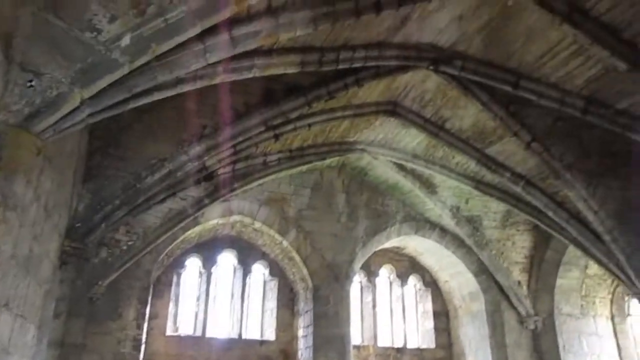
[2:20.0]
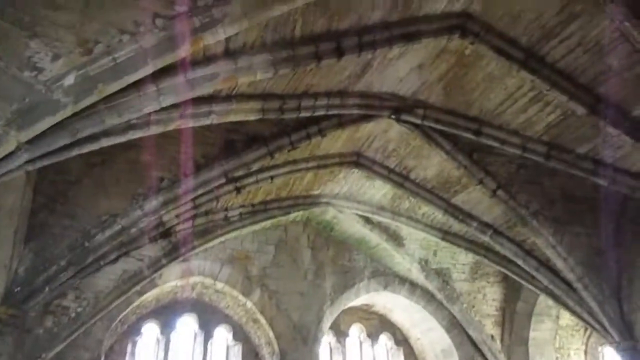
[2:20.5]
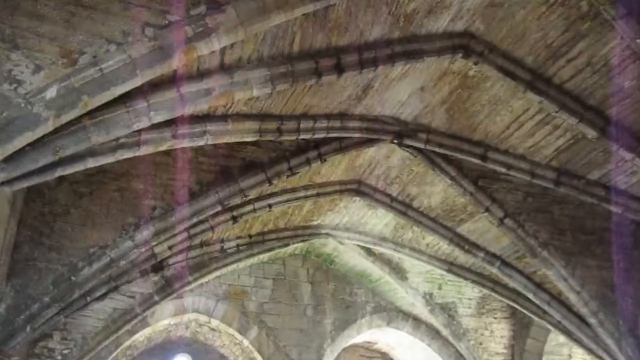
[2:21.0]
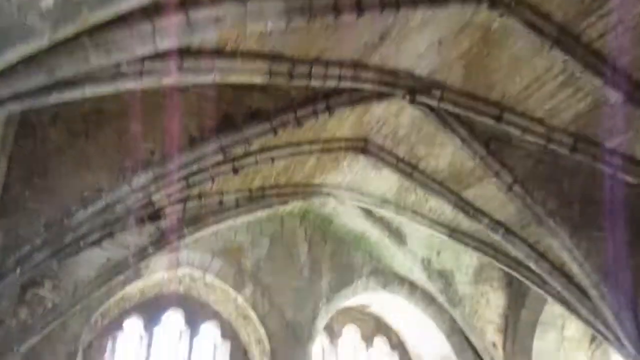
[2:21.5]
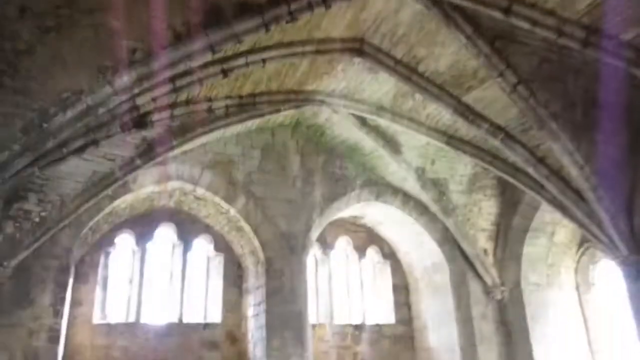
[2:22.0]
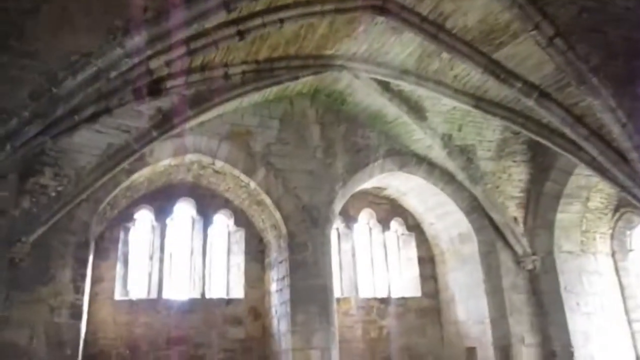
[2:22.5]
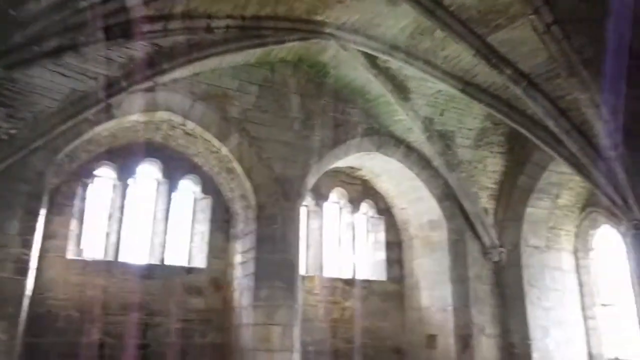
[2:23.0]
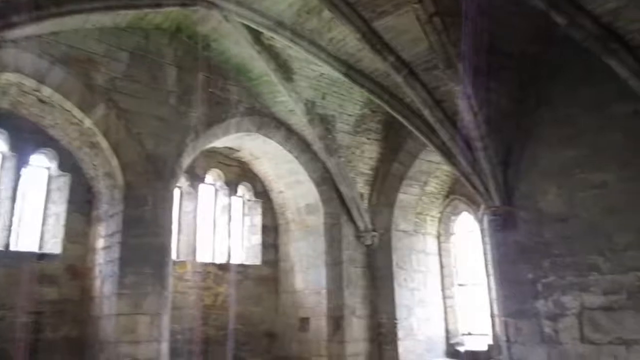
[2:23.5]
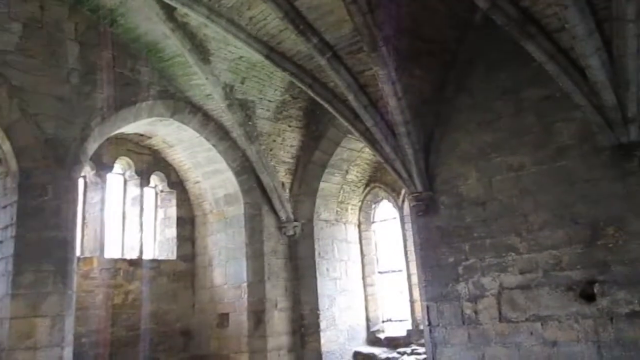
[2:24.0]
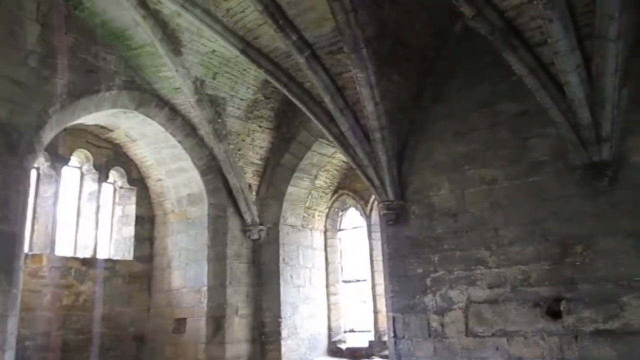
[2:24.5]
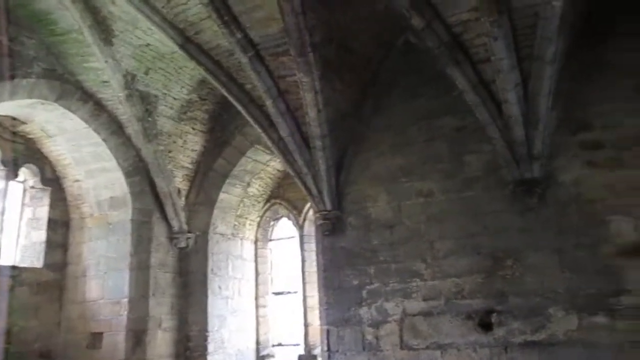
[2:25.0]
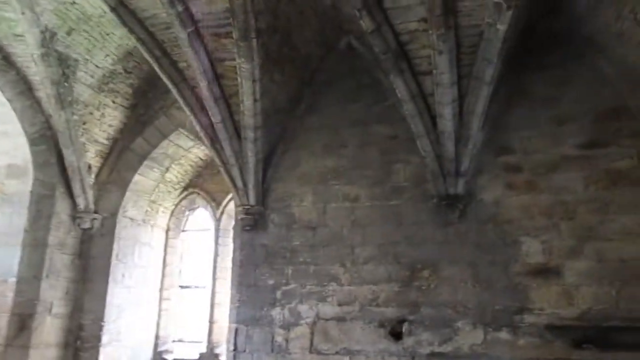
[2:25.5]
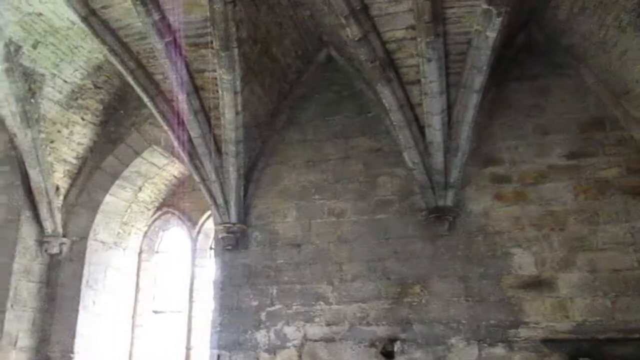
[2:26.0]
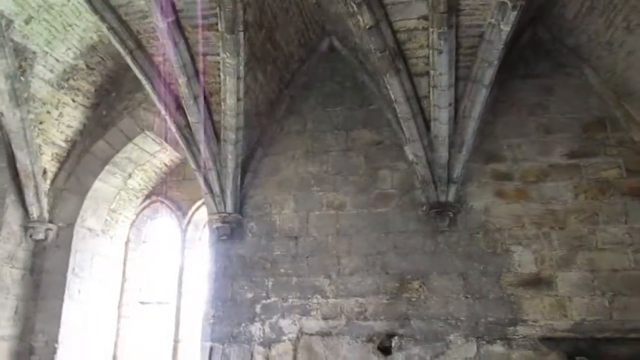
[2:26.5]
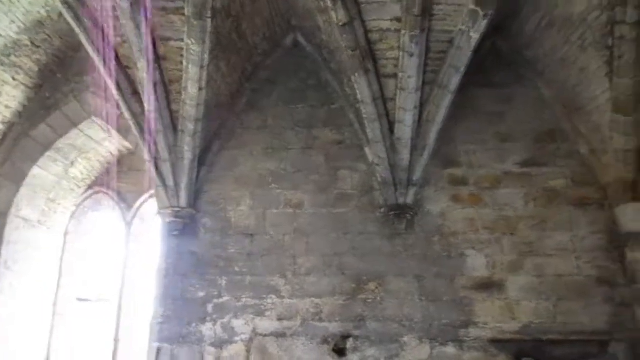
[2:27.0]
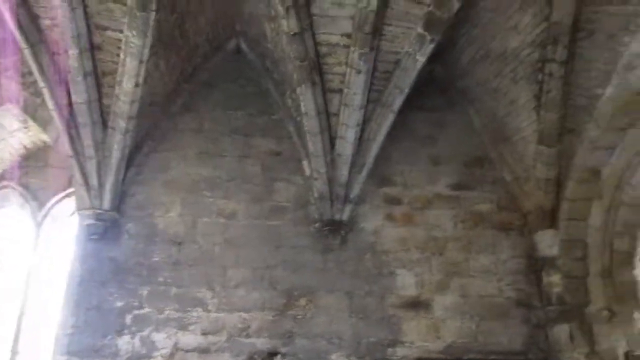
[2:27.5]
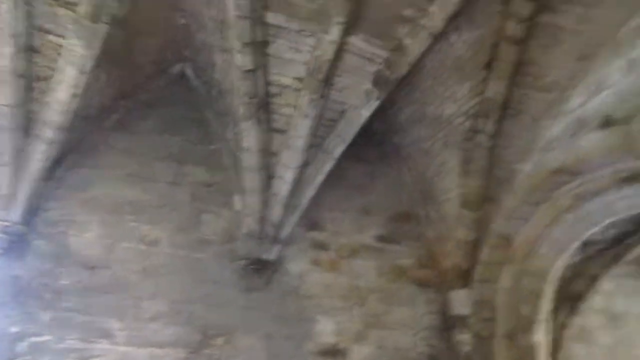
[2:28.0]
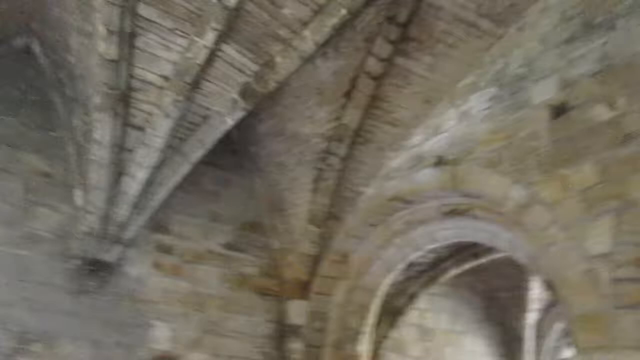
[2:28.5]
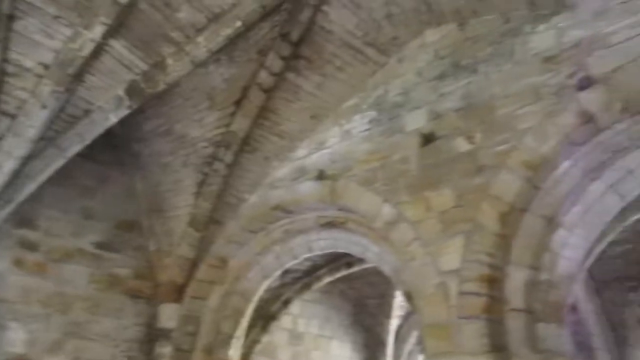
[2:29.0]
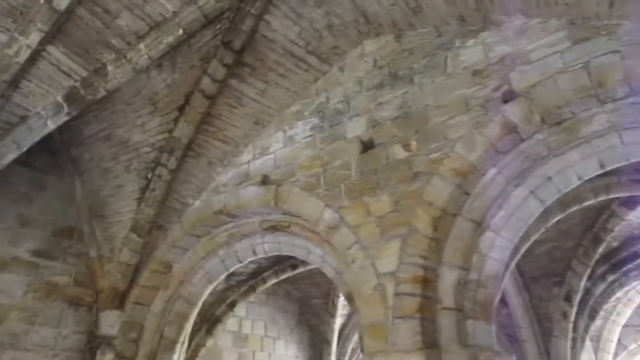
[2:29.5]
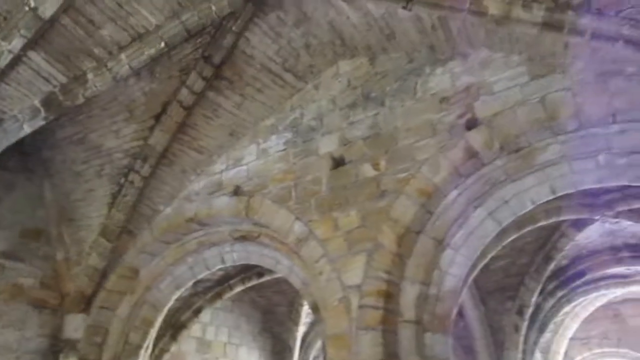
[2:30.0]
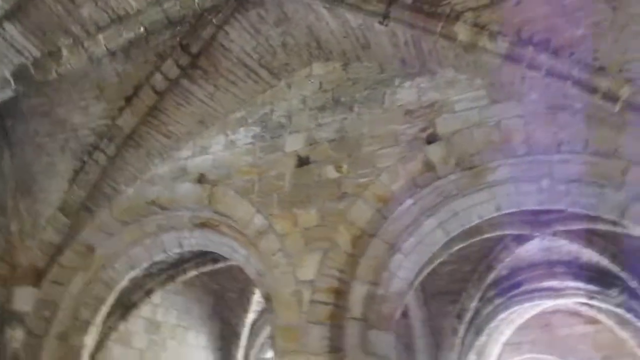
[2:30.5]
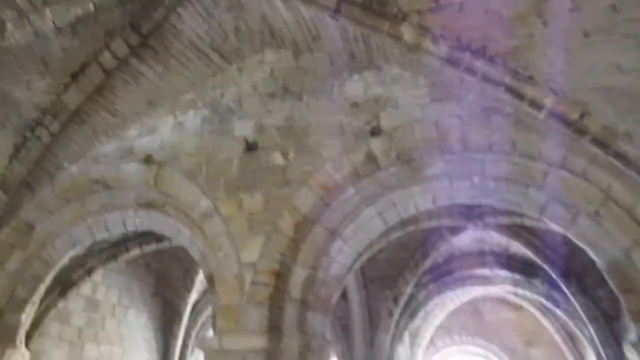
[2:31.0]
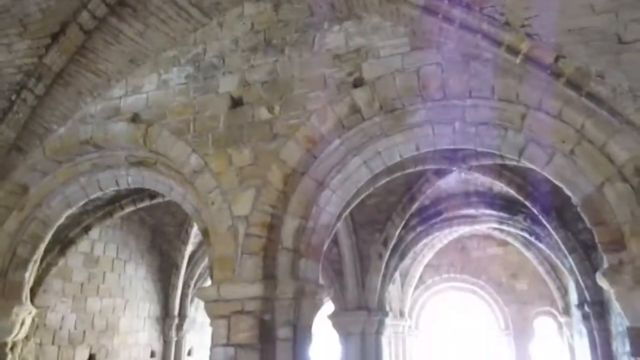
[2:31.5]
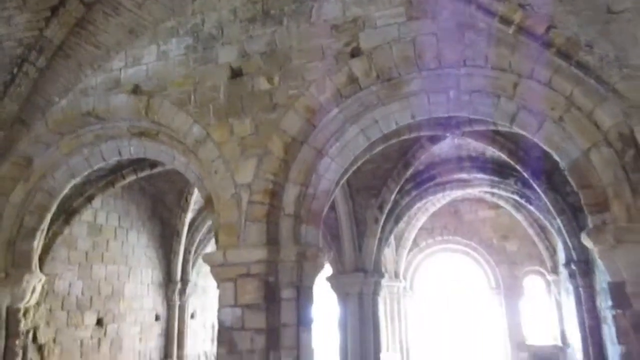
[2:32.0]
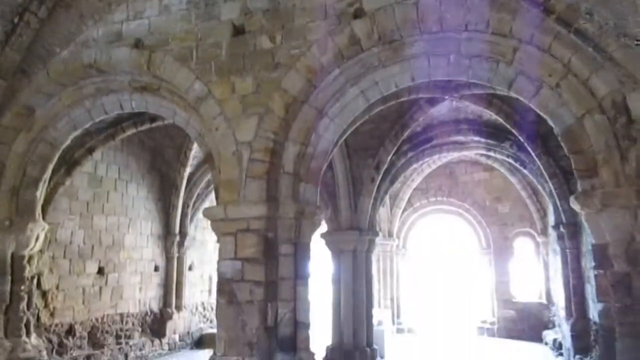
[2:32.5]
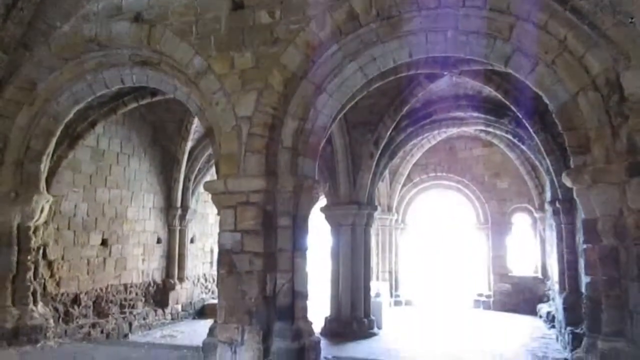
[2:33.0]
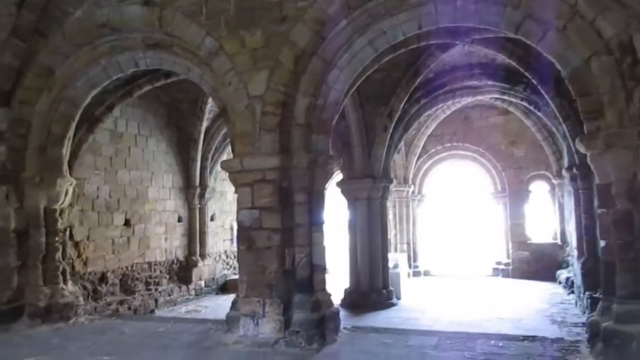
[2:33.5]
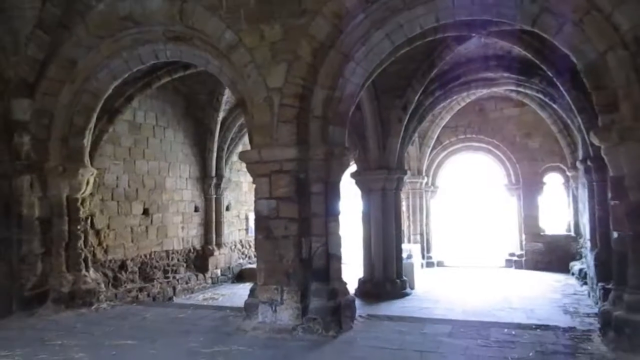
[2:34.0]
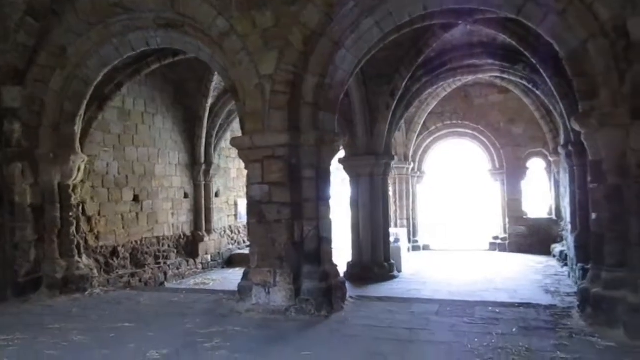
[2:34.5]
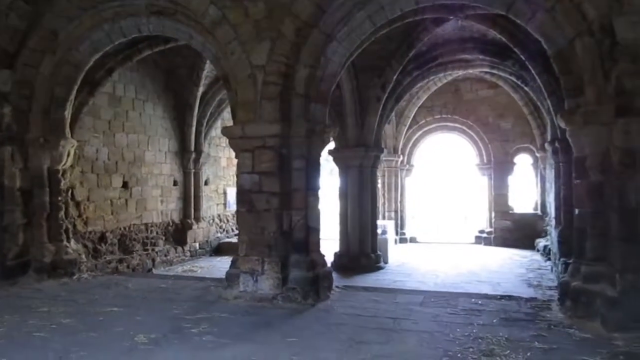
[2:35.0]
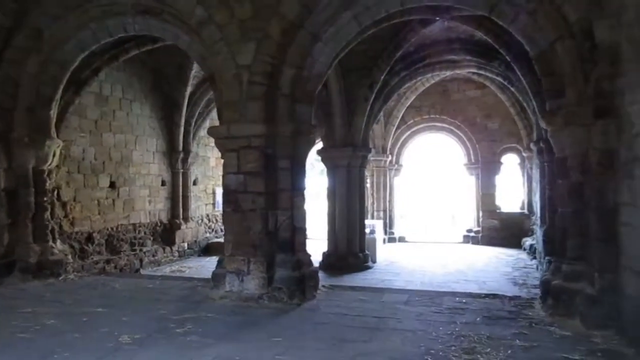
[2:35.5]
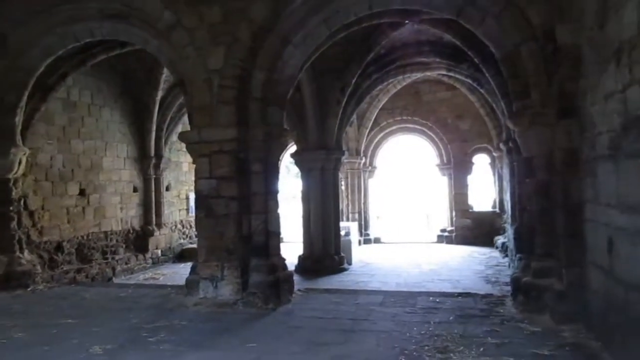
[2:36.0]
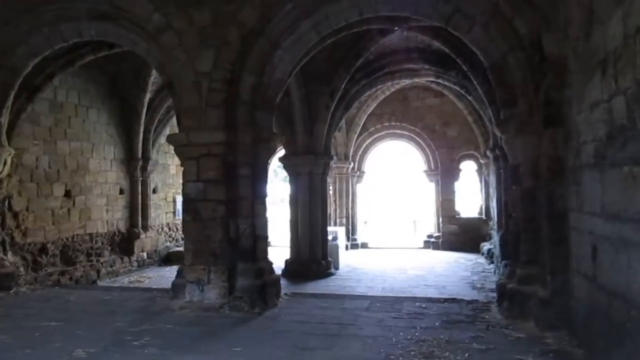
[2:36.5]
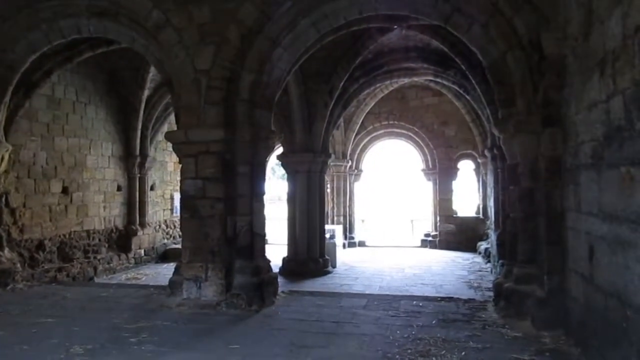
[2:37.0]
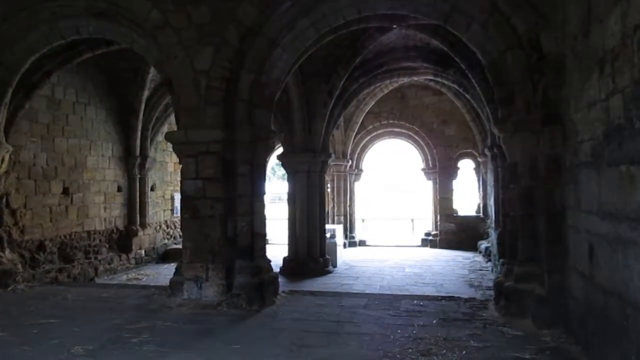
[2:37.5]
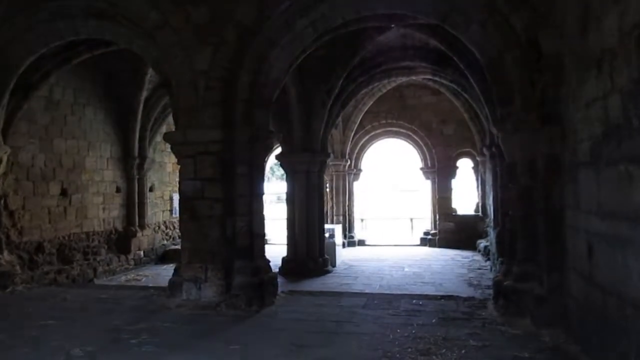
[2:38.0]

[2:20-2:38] The camera is pointed upward at the vaulted ceiling, then points back down slightly toward the windows in the archways. It pans to the right to show either windows or doors through another archway on the right wall; other than that, this right wall appears mostly solid, with no other windows visible. It pans right again to show the direction it just came from, continuing to walk in the other direction. This area has a blinding white light coming in through multiple archways in the background. On the left wall there appear to be small holes, which could be intentional design features rather than decay, and below them, connecting to the ground, are chipped bits of block. The ground appears to be white stone at the far end of the room from the camera and more brown near the camera. The wall is mostly brown, with bits of slightly green coloring.